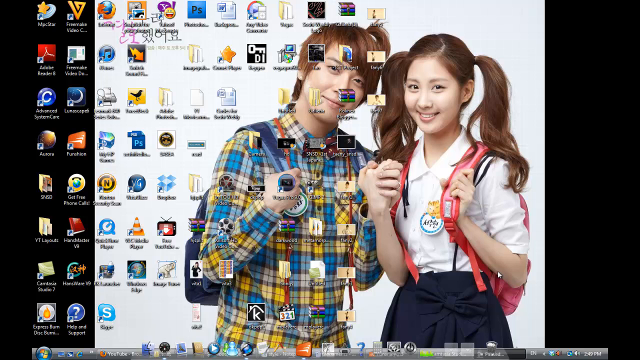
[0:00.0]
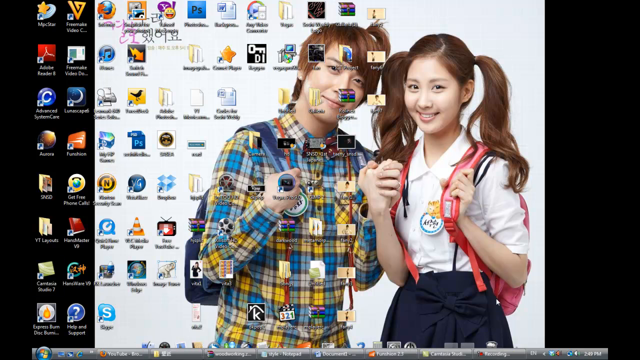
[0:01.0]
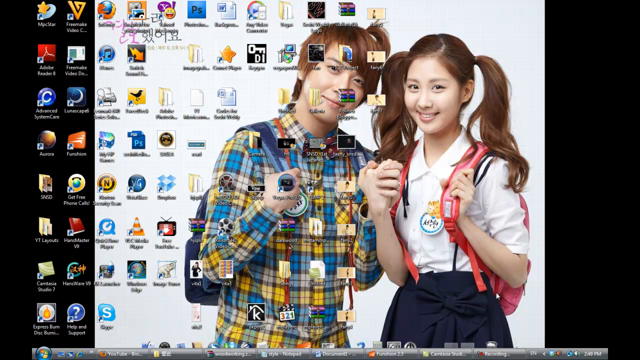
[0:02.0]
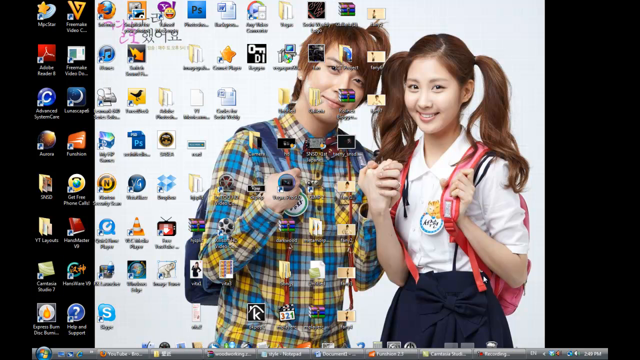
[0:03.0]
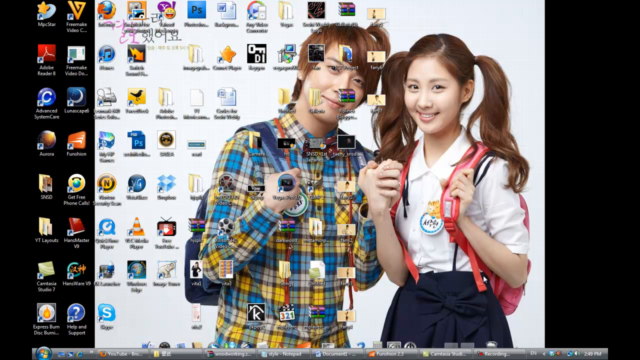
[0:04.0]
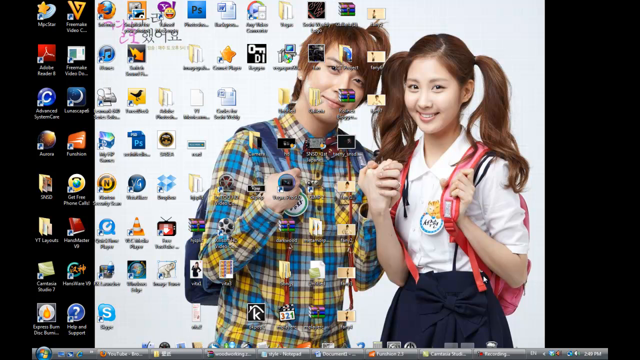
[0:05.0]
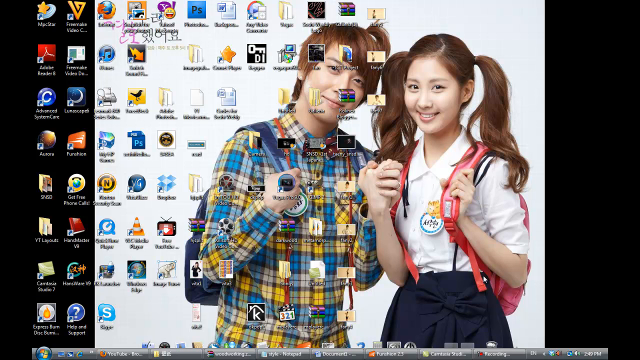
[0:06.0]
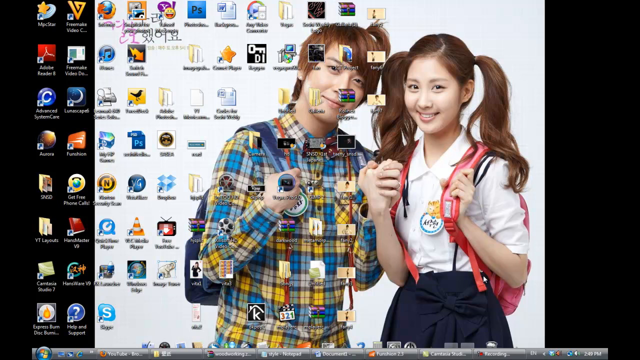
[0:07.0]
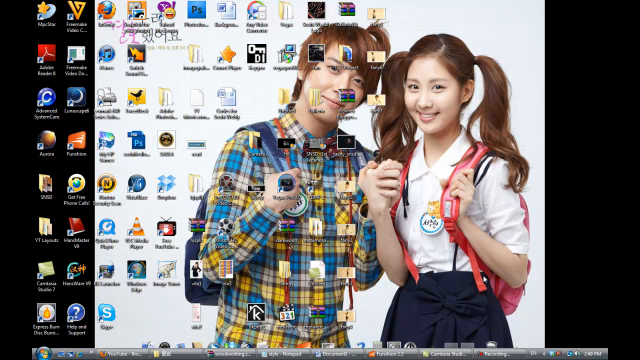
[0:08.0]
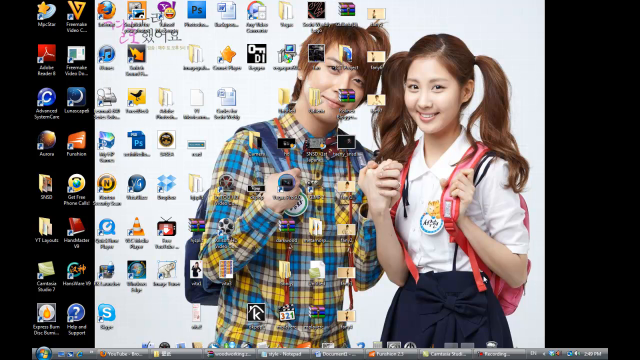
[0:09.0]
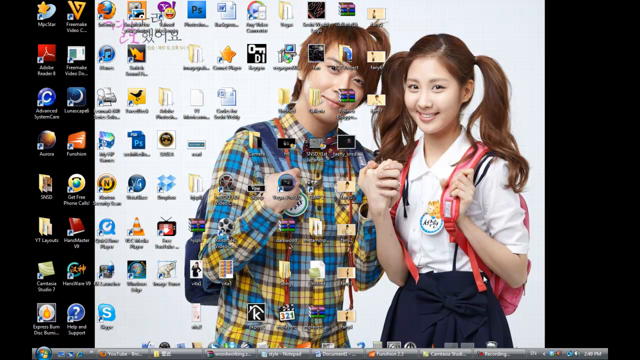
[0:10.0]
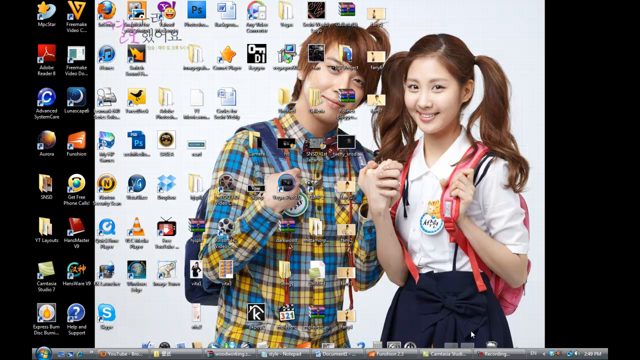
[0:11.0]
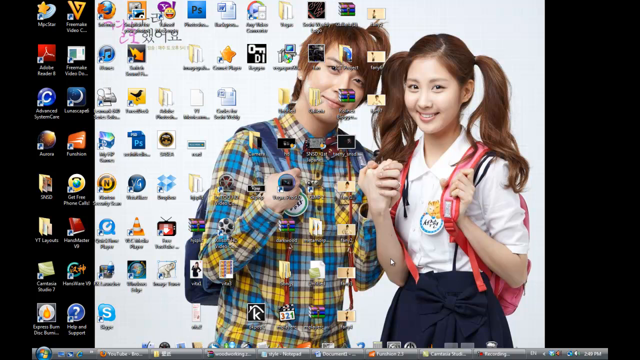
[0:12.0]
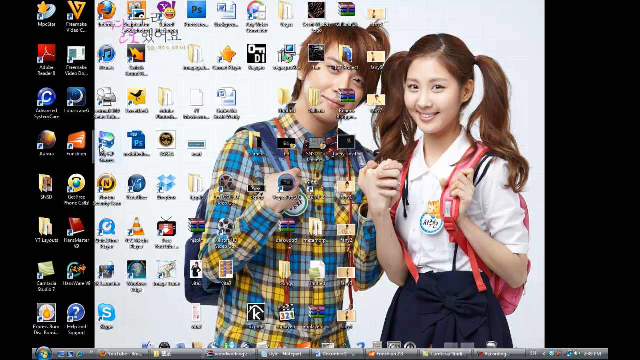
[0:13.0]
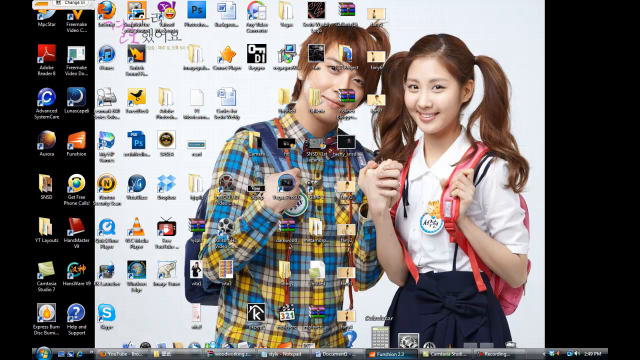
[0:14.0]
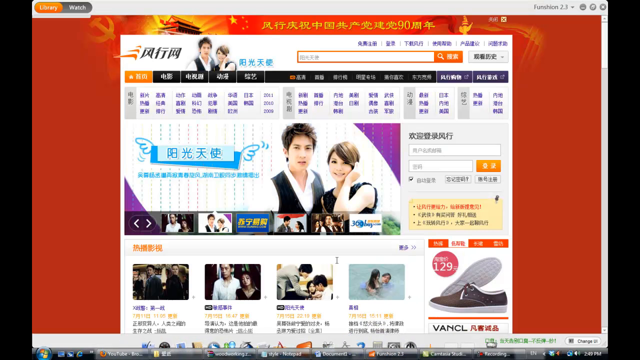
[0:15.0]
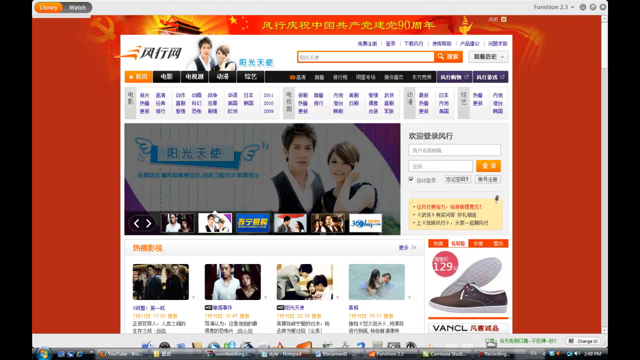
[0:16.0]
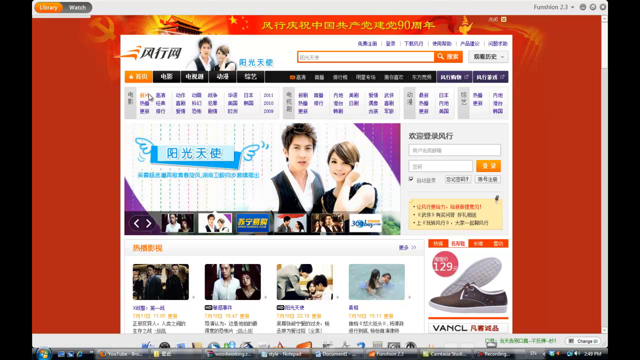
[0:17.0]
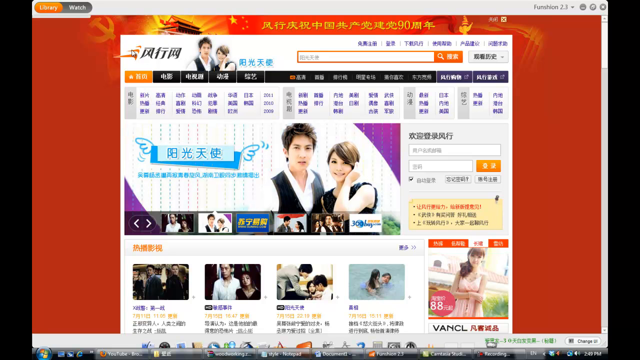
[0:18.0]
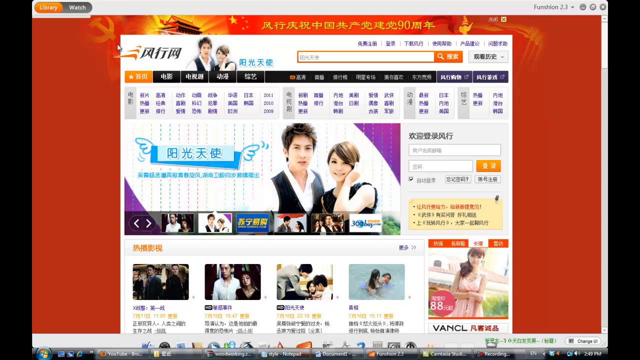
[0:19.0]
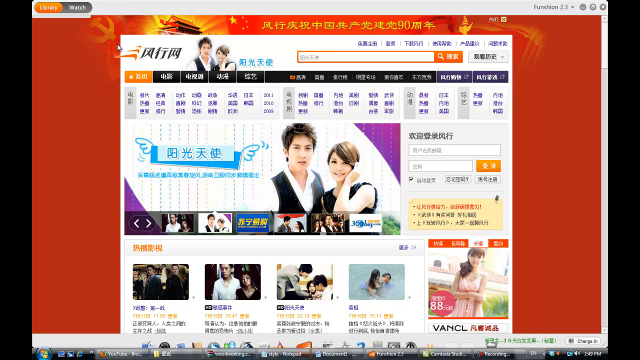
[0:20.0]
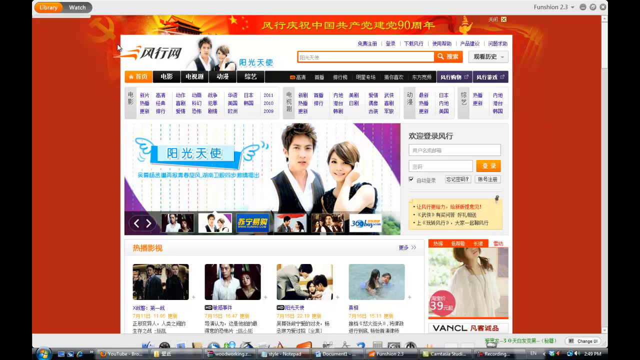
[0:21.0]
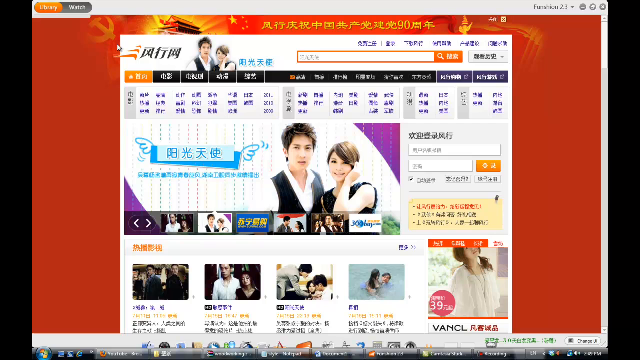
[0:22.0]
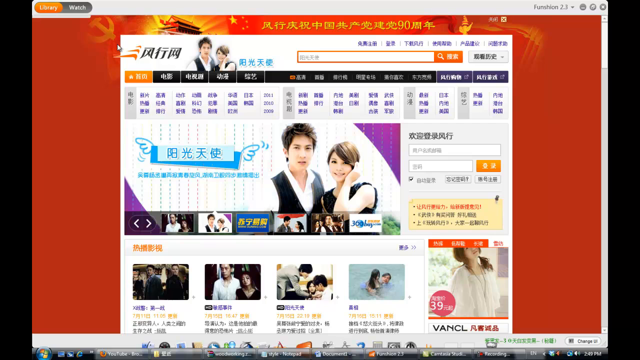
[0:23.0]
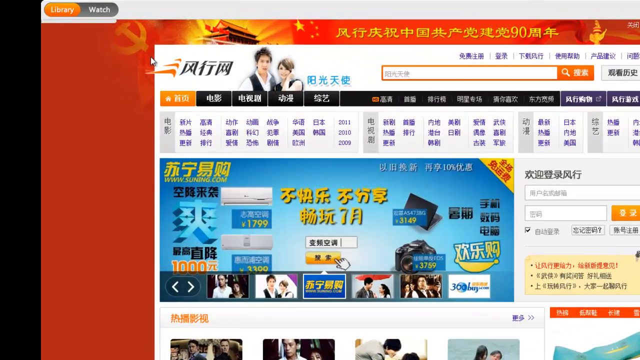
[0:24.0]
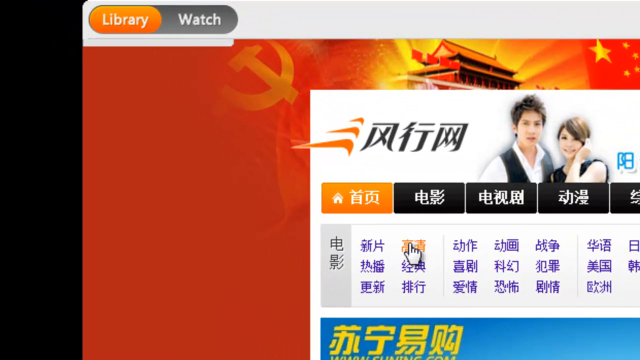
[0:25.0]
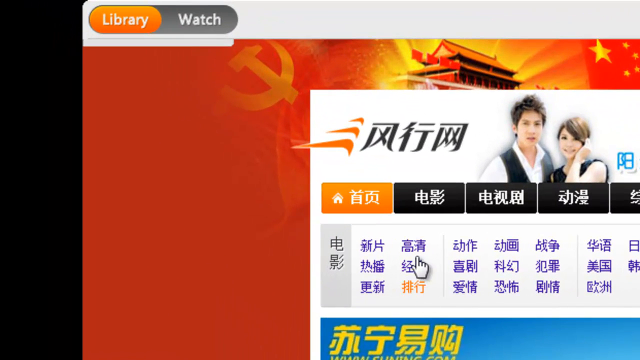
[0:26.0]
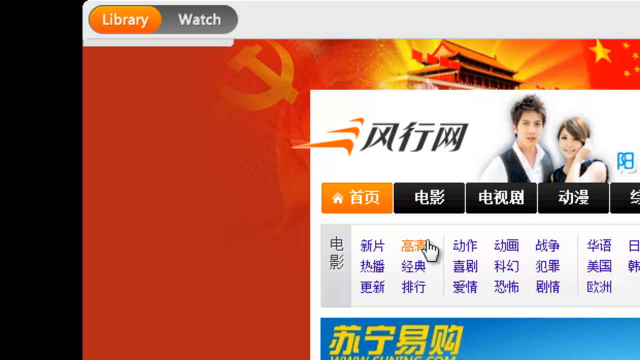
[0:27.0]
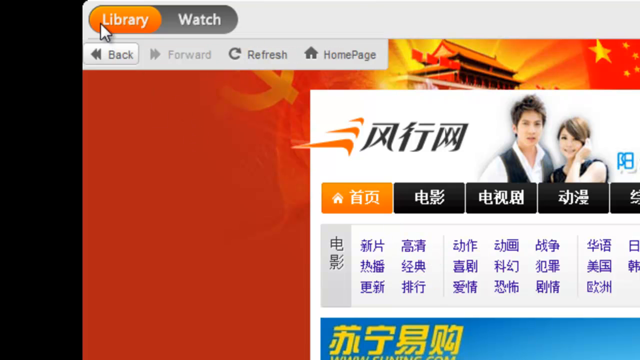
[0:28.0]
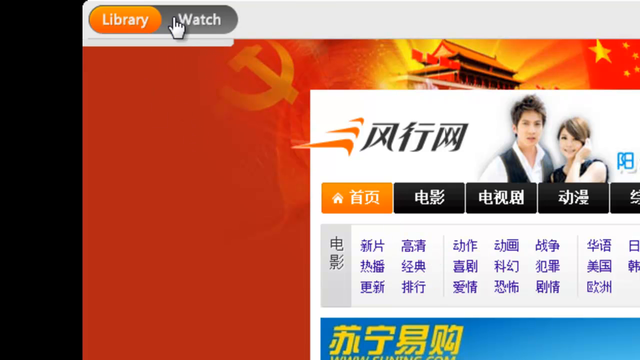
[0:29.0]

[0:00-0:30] A computer desktop shows several icons of different programs and folders, aligned perfectly; some are folders and some are shortcuts to programs. The desktop background is a photo of a young couple sitting to the right. The user is probably about to do a demonstration from the desktop. Someone goes into a program from the desktop, which opens a website that looks like some sort of social or dating website, maybe a dating match website. The writing on the website includes some ideograms. It shows profiles of couples and different videos of couples, and the videos are in an Asian language.